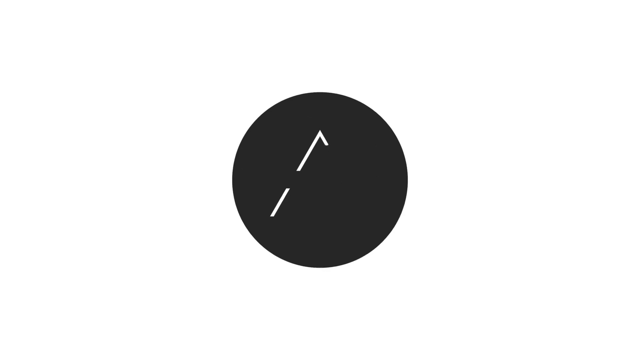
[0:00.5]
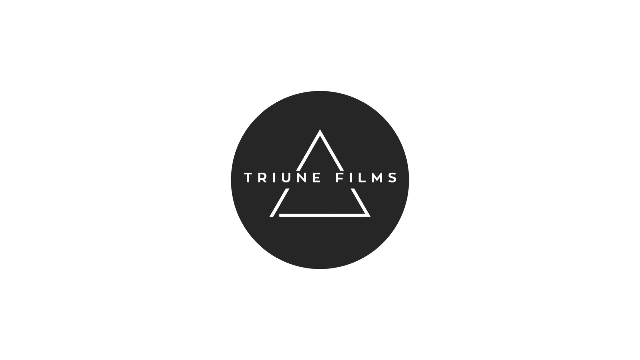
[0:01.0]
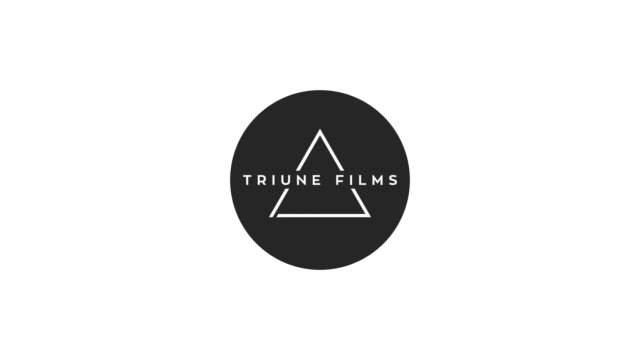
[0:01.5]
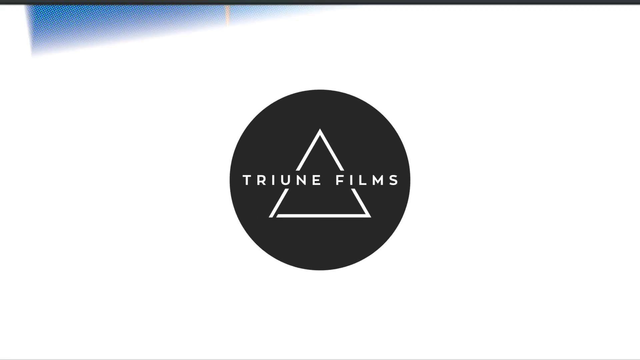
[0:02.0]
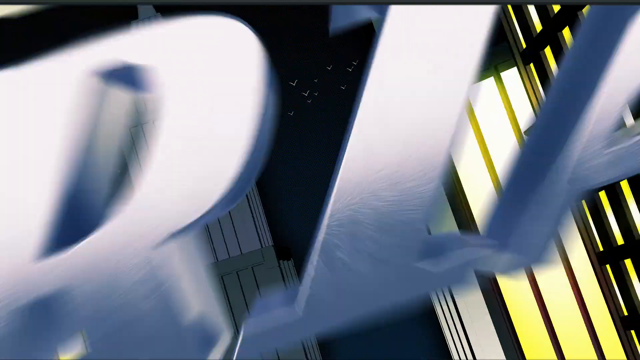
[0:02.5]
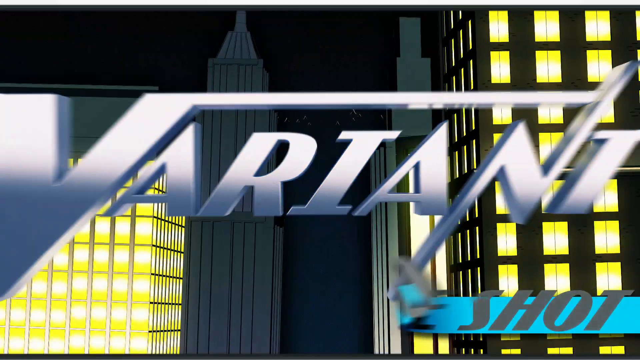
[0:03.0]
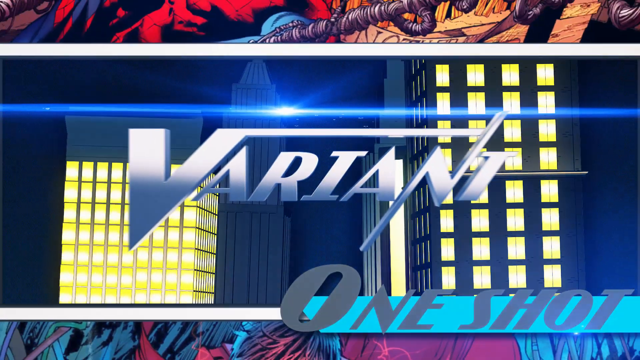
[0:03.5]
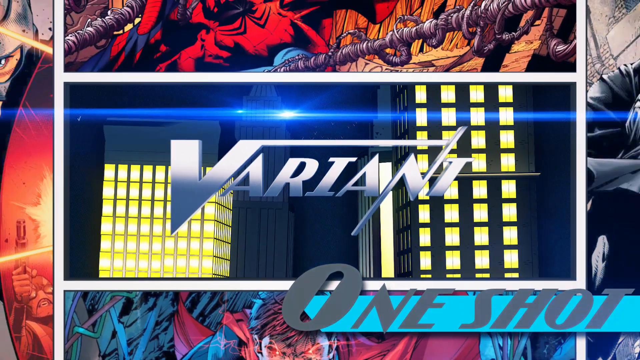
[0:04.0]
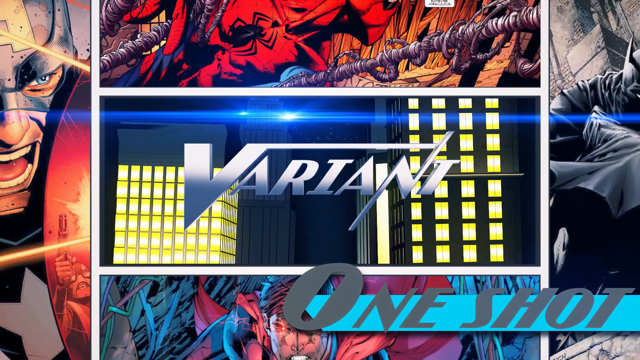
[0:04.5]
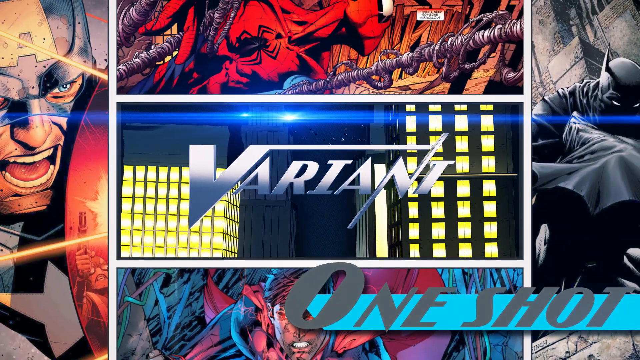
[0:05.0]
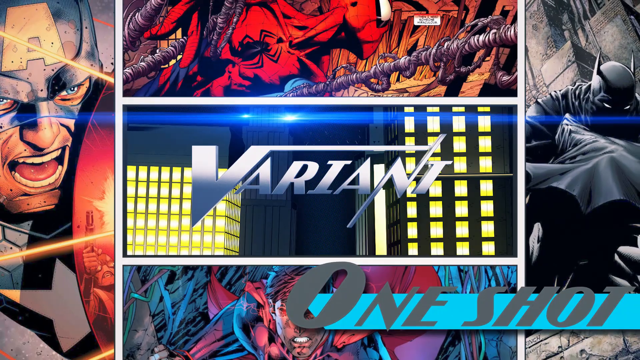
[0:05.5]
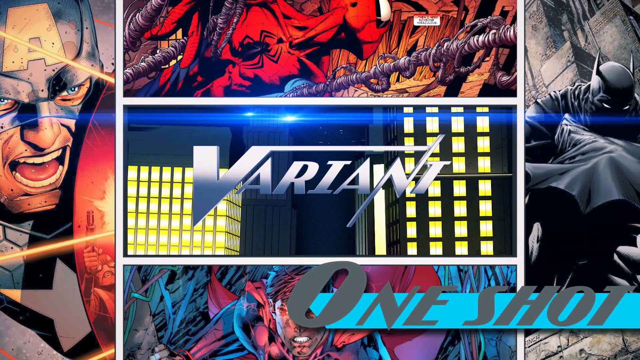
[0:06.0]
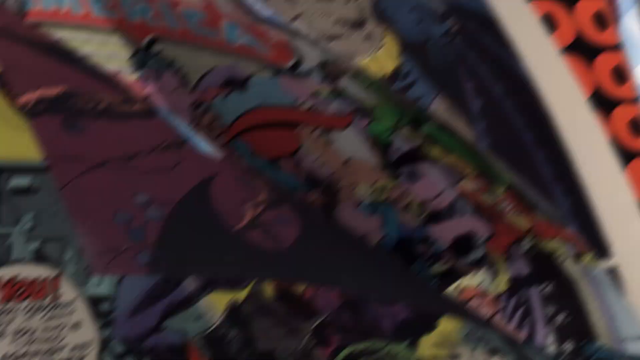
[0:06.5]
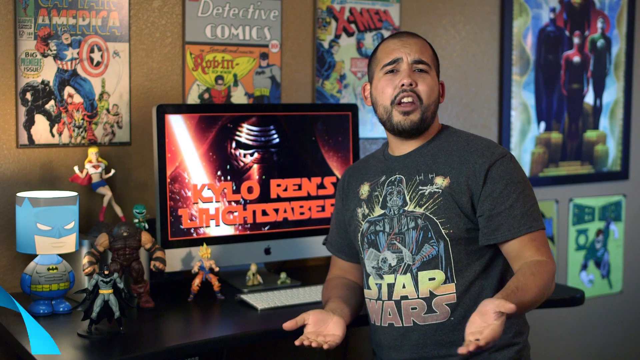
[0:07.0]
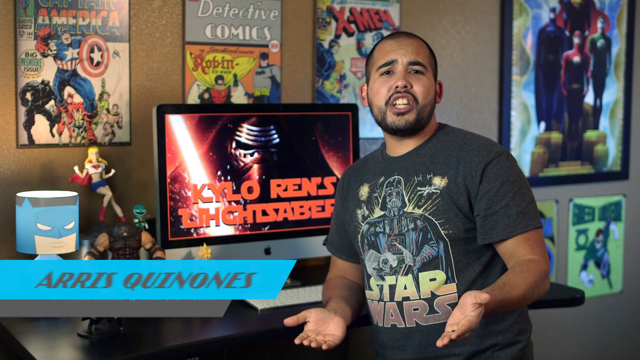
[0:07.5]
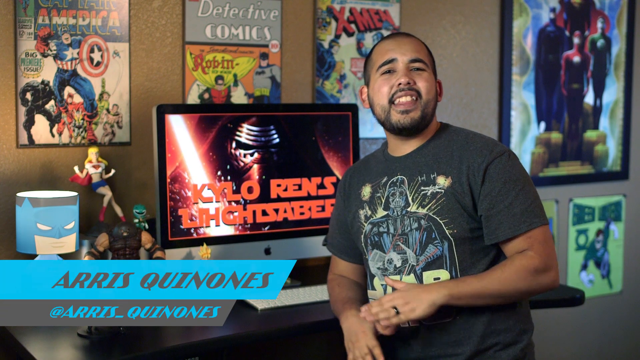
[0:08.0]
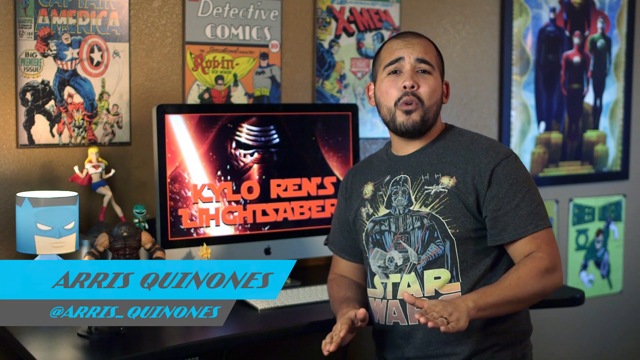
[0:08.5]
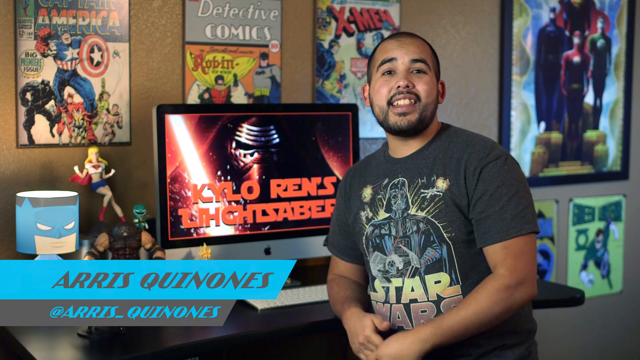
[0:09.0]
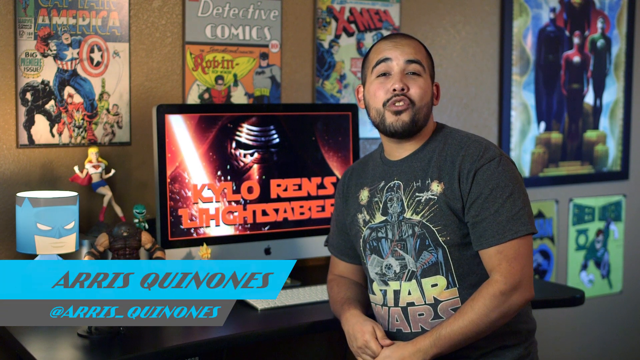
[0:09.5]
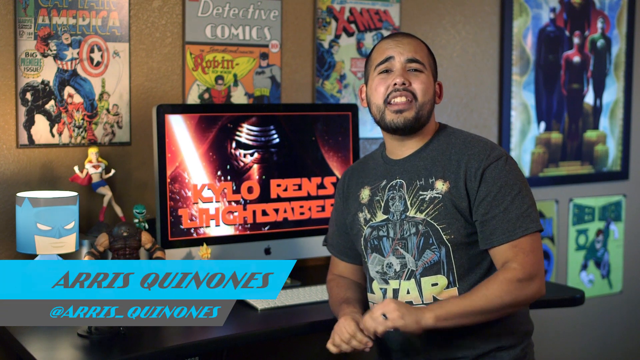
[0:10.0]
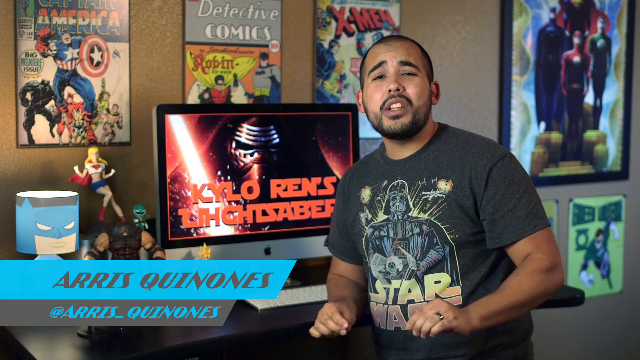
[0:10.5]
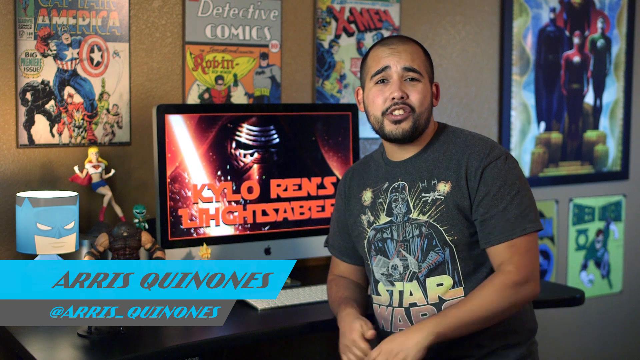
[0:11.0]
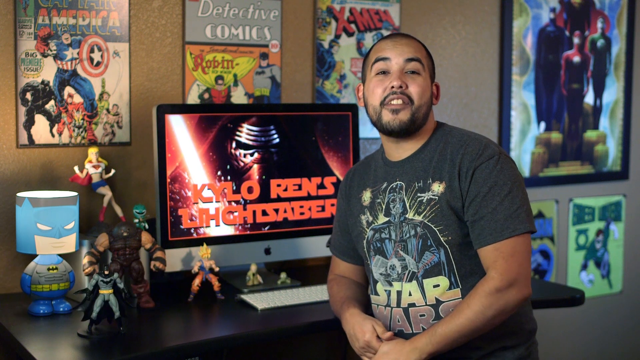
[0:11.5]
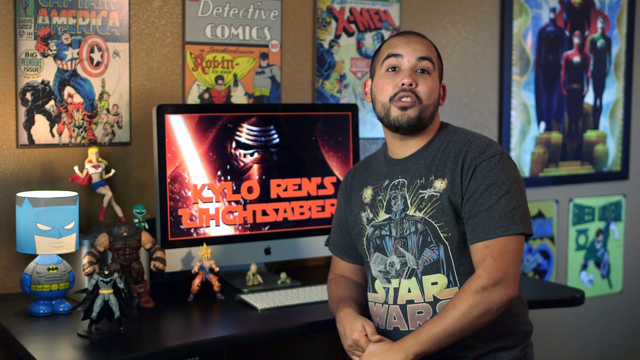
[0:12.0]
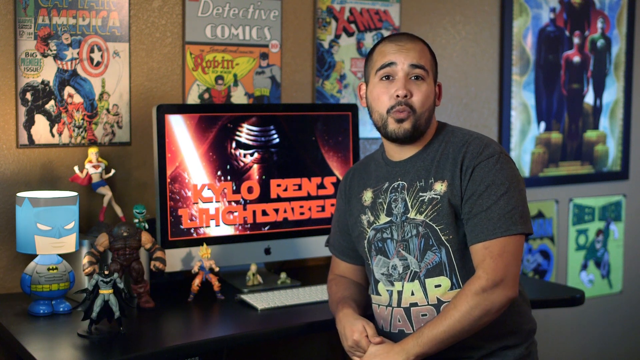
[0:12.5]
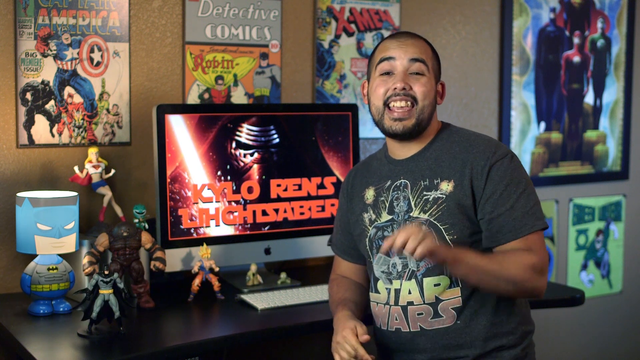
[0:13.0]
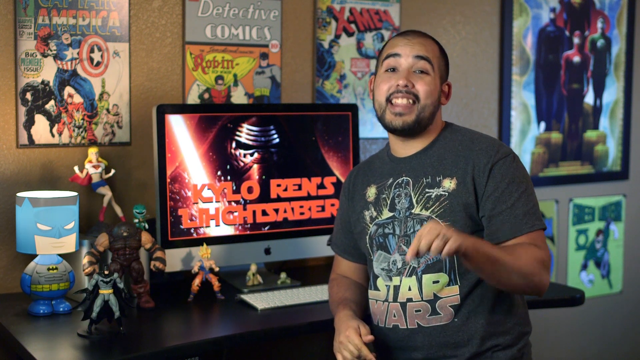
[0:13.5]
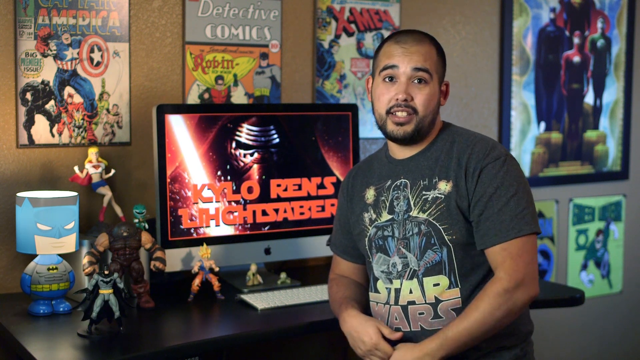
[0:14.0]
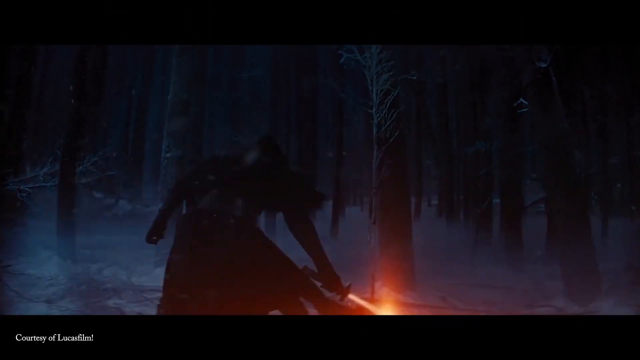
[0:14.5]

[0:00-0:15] A YouTube video titled "how Kylo Ren's lightsaber works" appears to have been uploaded by a creator named Arris Quinones for Variant Comics, and a Tribute Films banner shows at the start. The narrator appears to be a man of Hispanic descent with brown skin and short cropped black hair. He is seated in front of an Apple computer showing an image of Kylo Ren with the title "Kylo Ren's Lightsaber" over it. Framed enlargements of comic books hang on his walls. The video also shows a very short clip of Kylo Ren activating his lightsaber in a dark wooded environment.